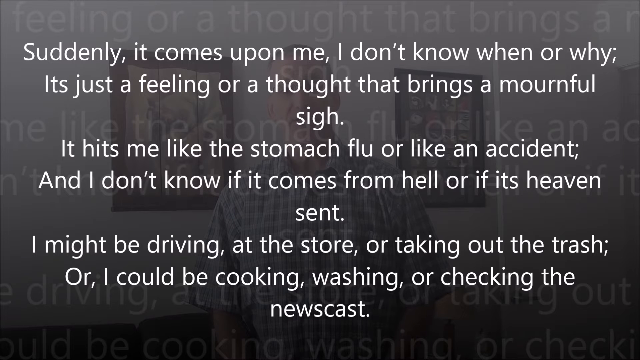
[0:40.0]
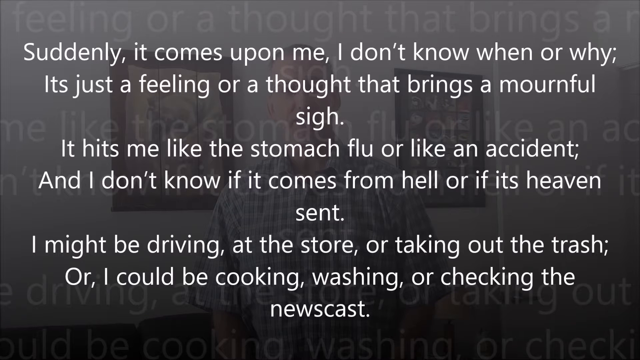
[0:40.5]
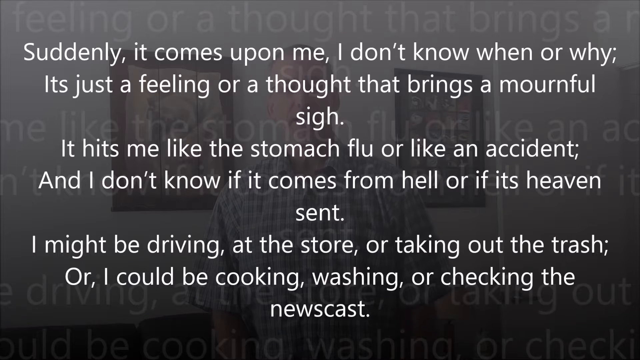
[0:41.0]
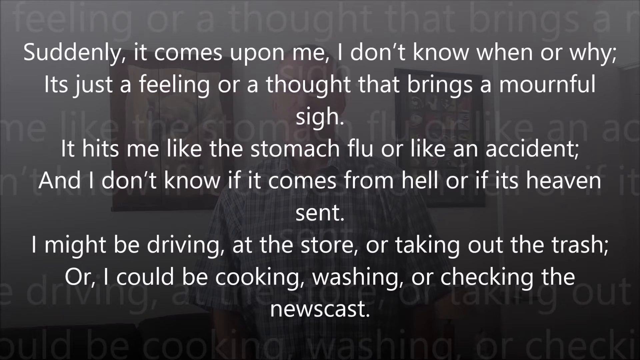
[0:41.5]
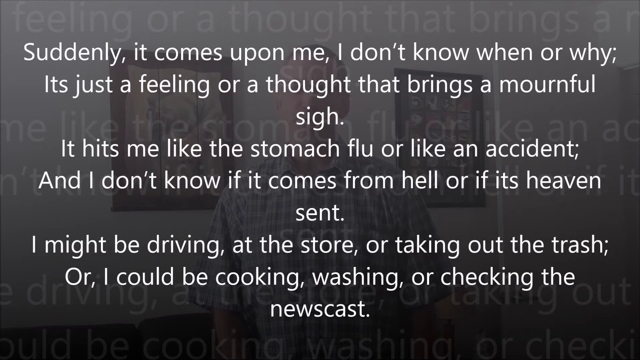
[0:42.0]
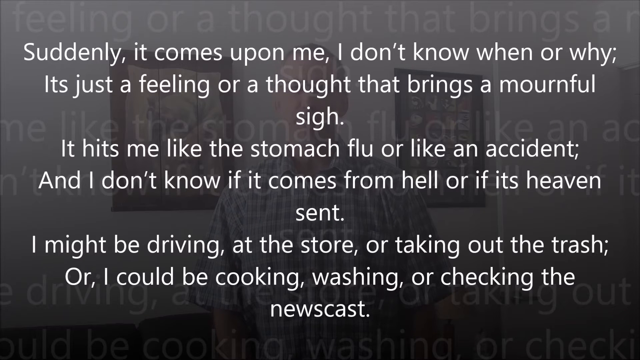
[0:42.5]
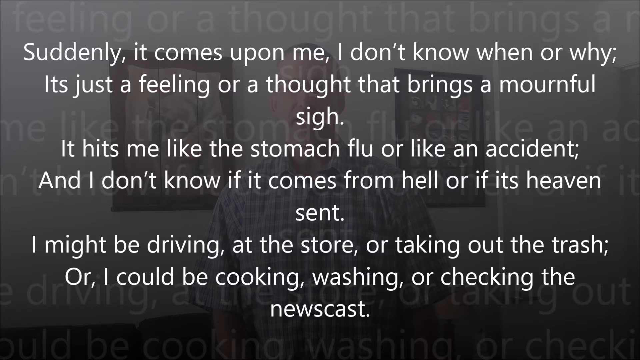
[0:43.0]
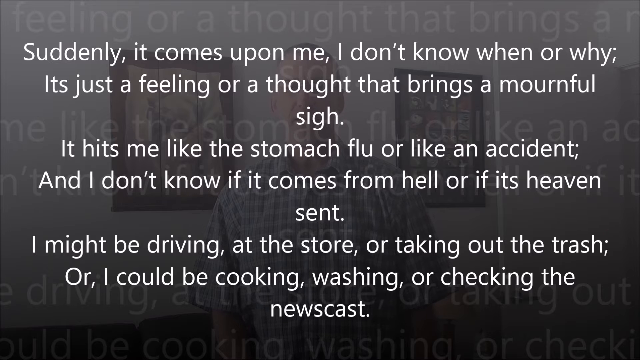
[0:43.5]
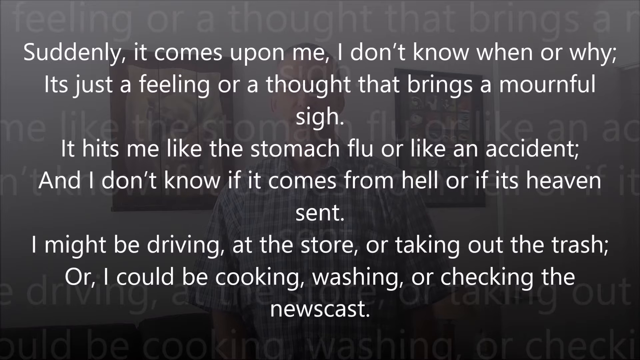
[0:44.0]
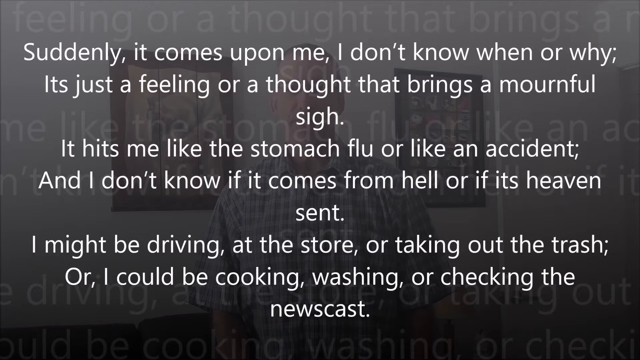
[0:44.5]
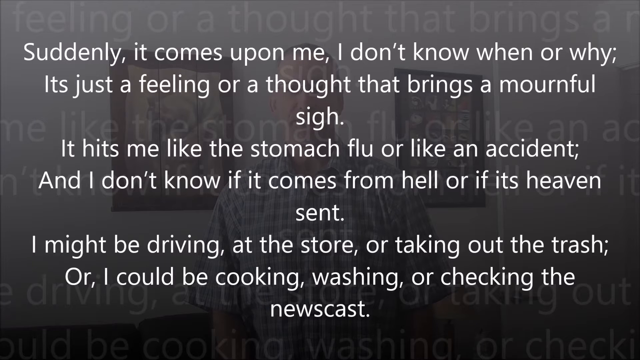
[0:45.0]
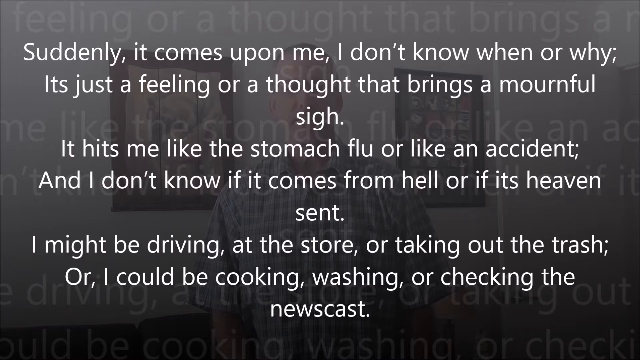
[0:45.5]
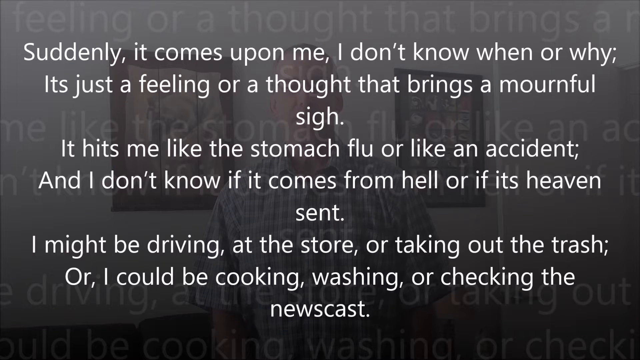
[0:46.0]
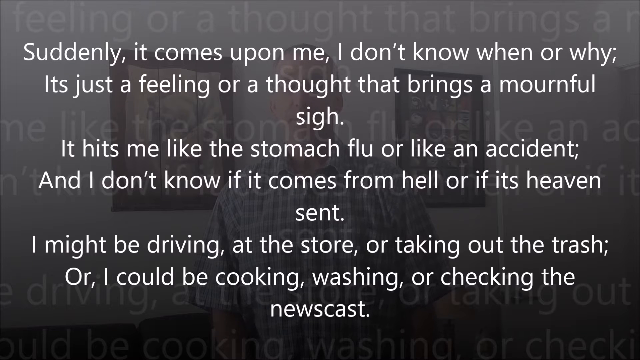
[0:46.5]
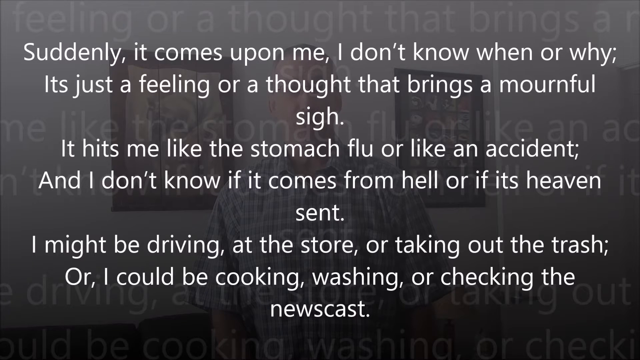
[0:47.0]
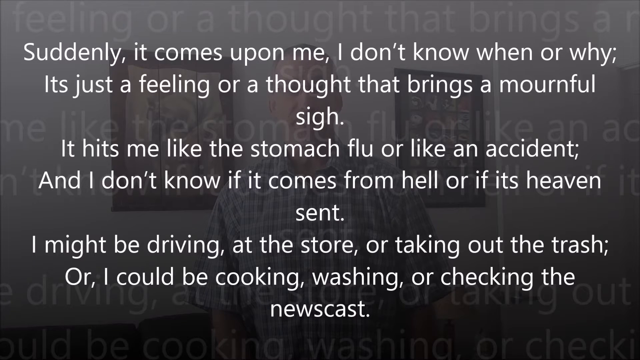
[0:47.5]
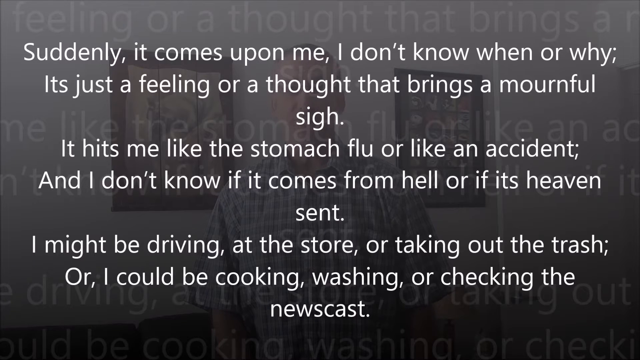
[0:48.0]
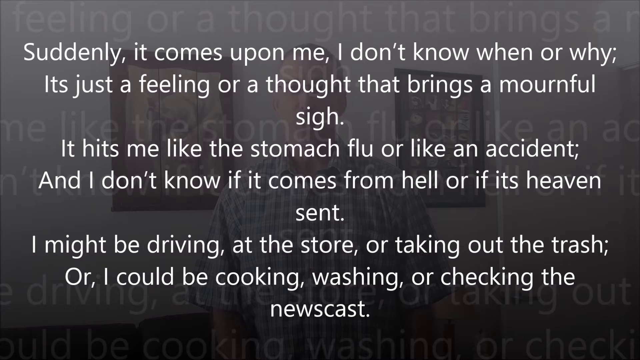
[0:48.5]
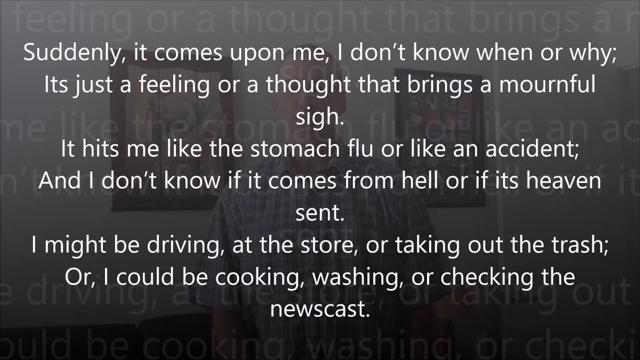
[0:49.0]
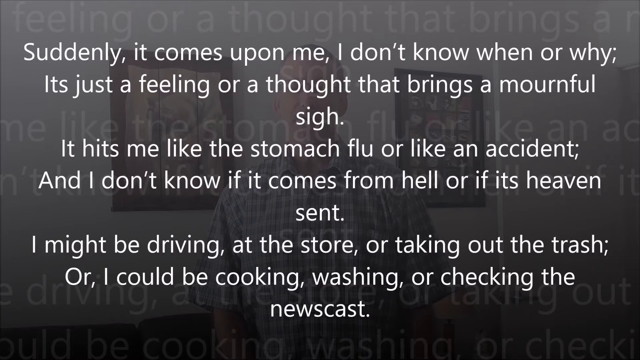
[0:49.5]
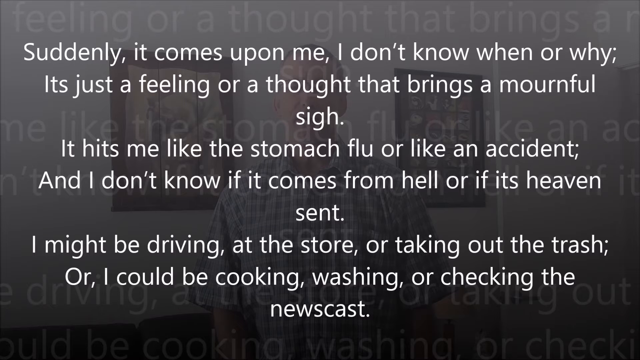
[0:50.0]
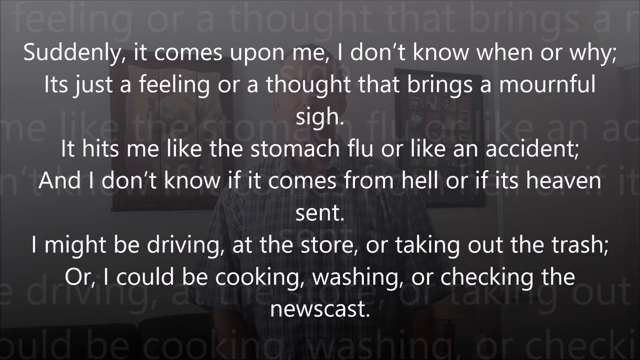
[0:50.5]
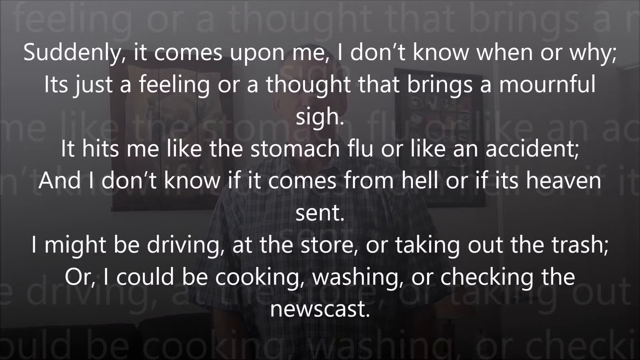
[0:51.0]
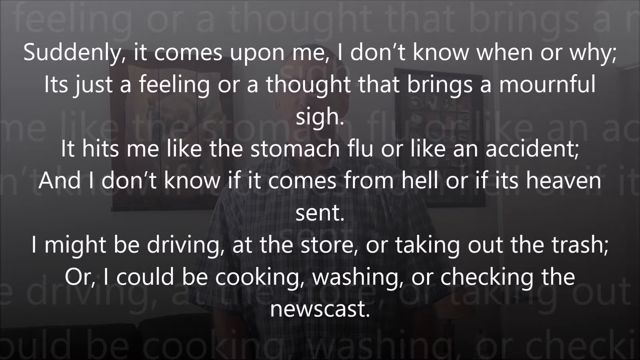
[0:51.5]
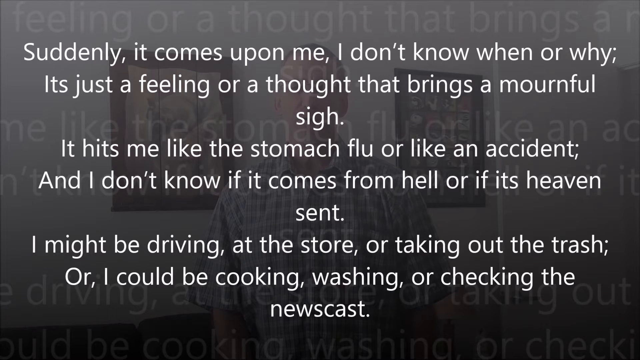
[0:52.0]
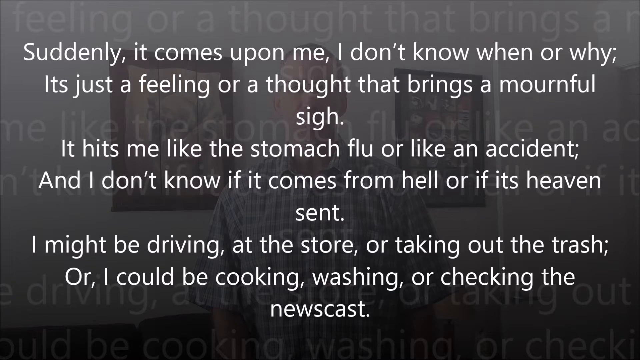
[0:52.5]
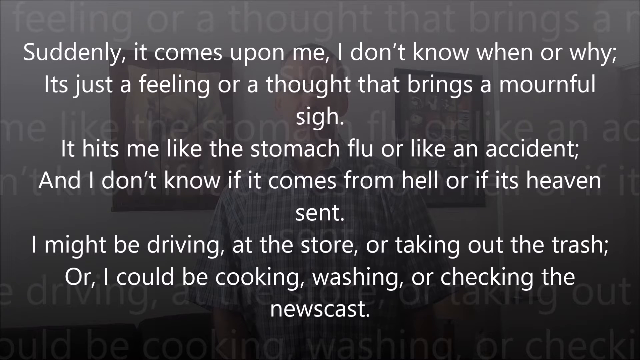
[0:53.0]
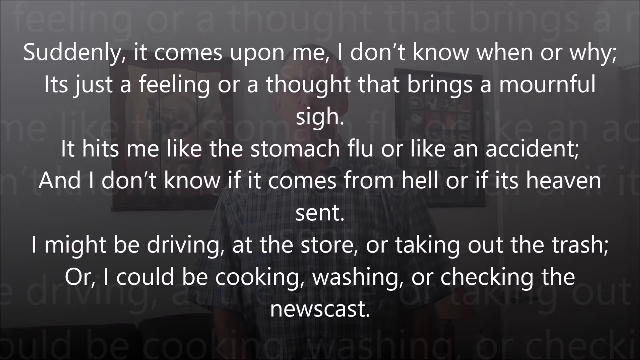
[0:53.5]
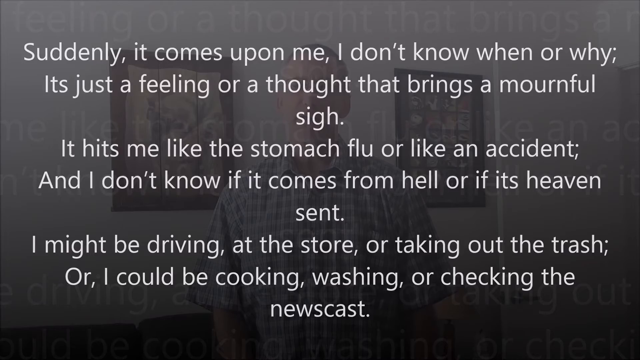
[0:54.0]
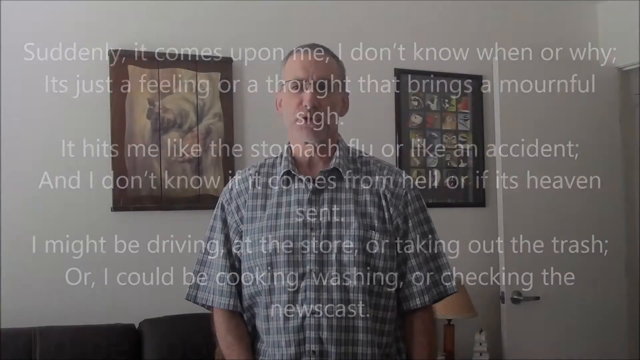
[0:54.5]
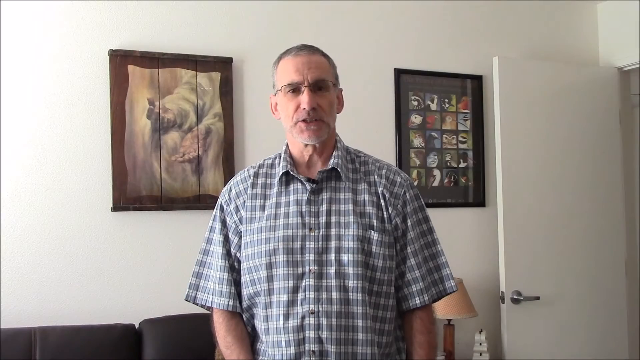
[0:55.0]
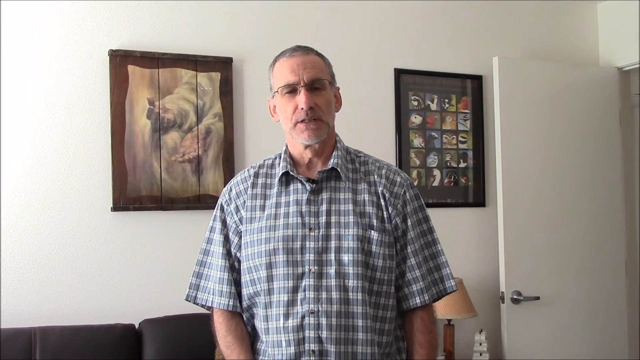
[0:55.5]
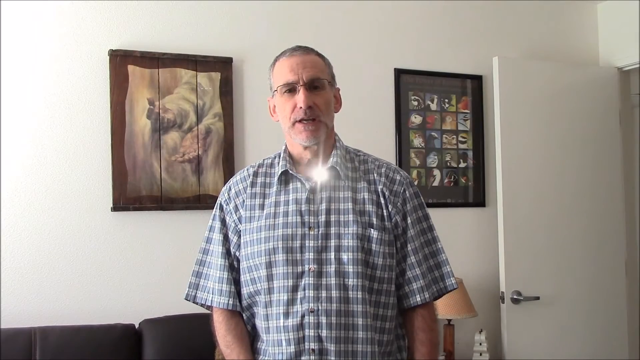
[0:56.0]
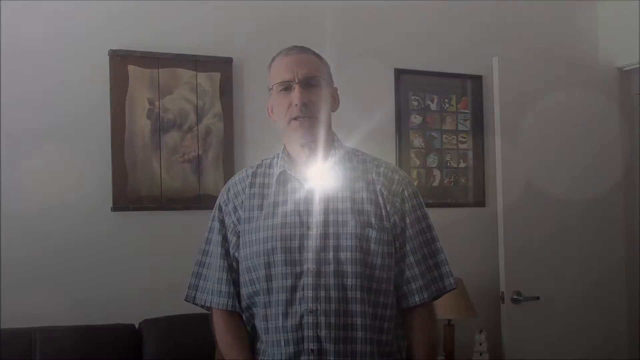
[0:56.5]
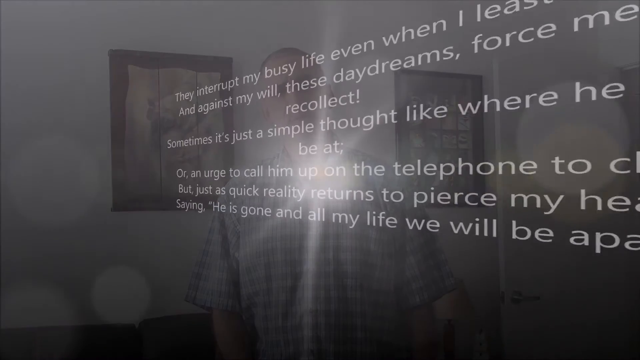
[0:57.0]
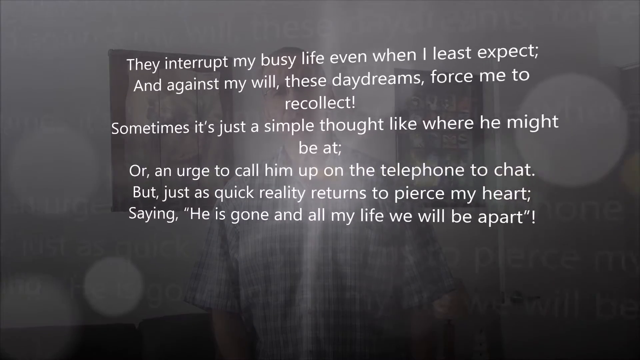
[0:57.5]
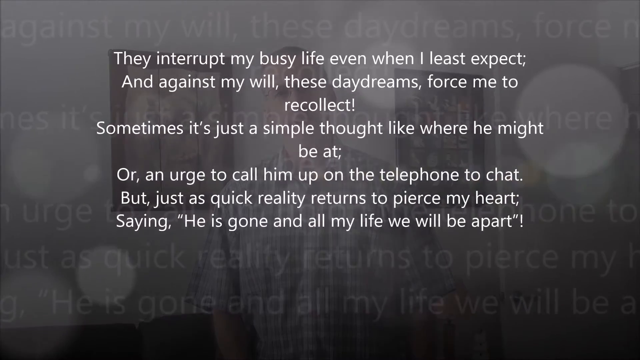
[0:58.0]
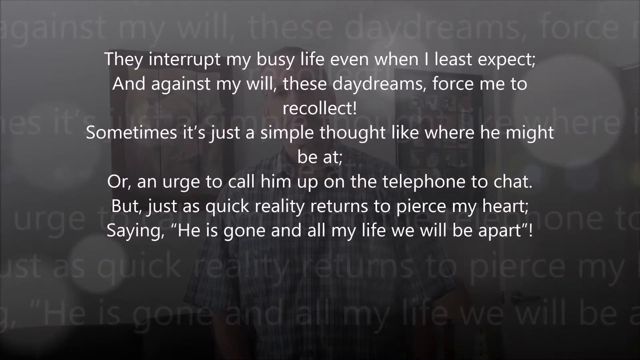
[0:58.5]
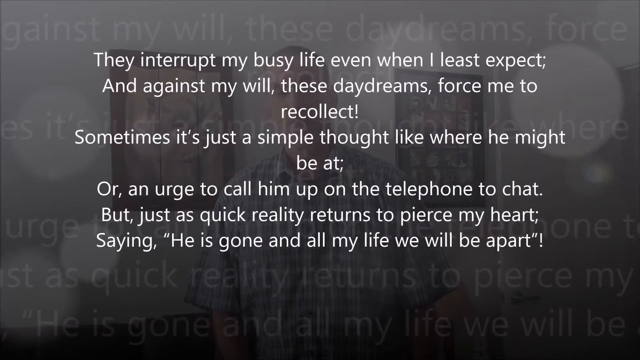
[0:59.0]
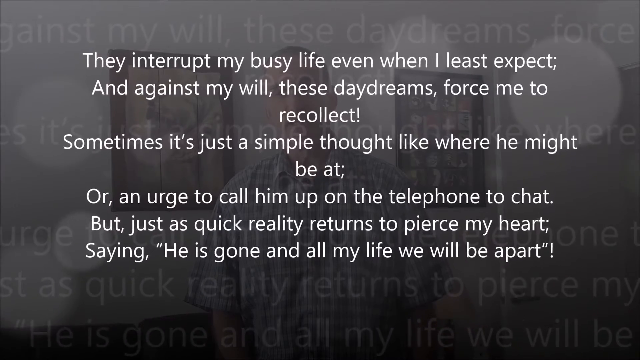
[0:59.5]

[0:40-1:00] The poem stays on the screen for about 14 seconds, then the video goes to the elderly man in the gray shirt standing in the room with white walls. A light appears in the middle of the video again and the screen transforms into another poem, which reads, "They interrupt my busy life even when I least expect; And against my will, these daydreams, force me to recollect! Sometimes it's just a simple thought, like where he might be at; or an urge to call him up on the telephone to chat. But just as quick reality returns to pierce my heart, saying he is gone and all my life we will be apart." This text is also in a white bold font on a dark gray background.